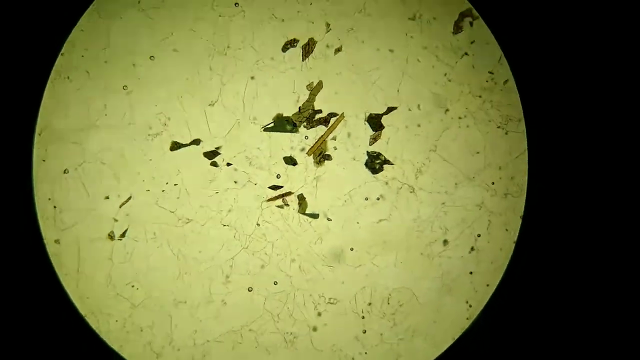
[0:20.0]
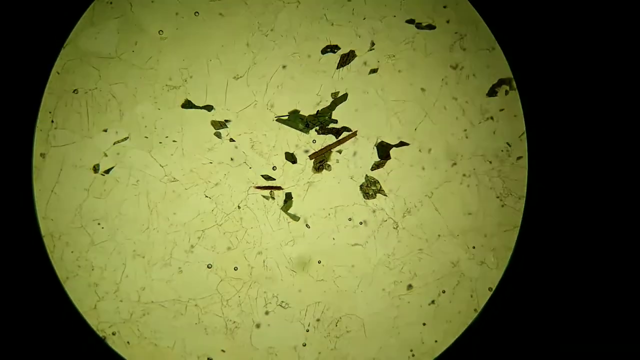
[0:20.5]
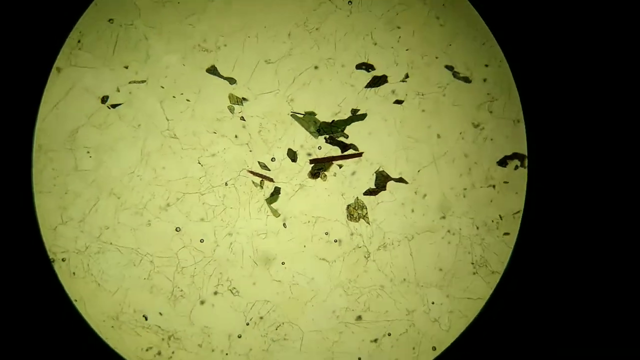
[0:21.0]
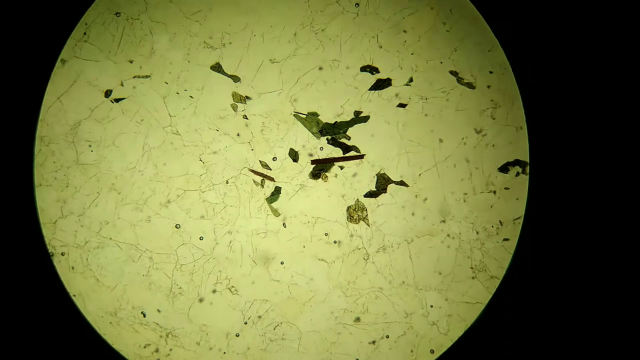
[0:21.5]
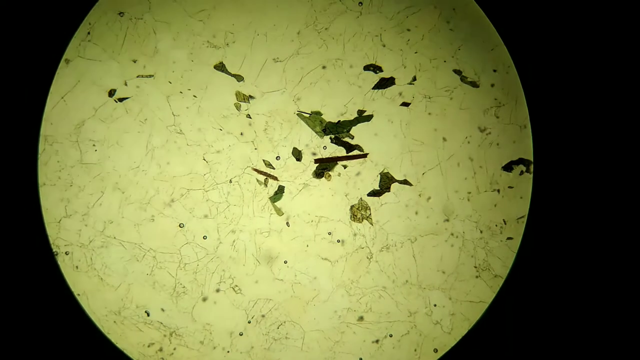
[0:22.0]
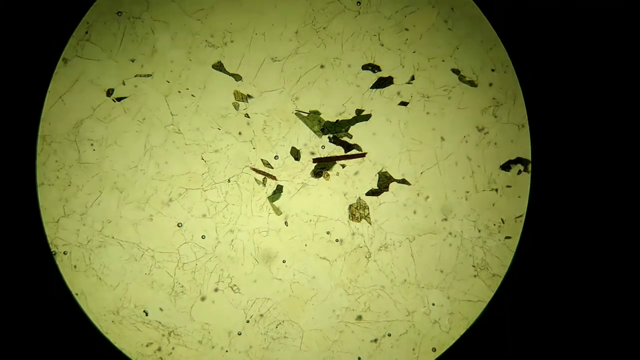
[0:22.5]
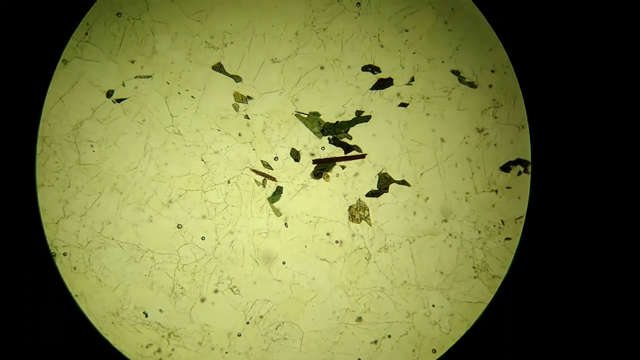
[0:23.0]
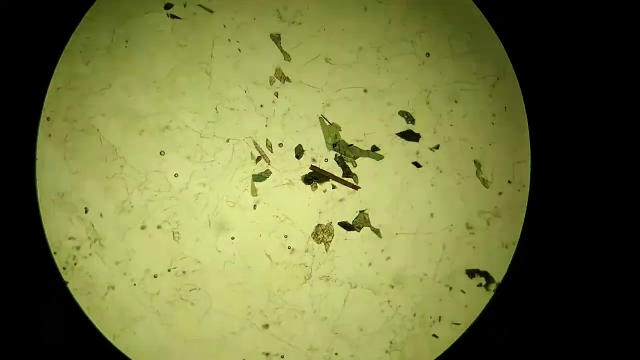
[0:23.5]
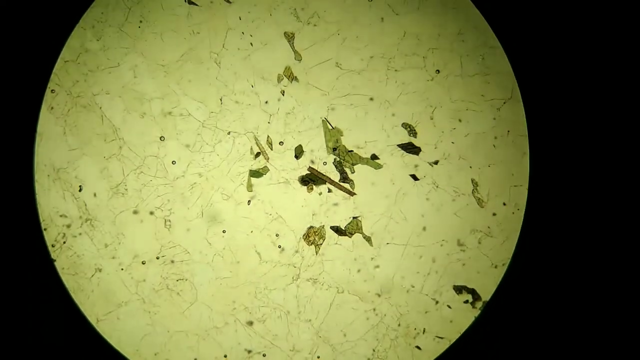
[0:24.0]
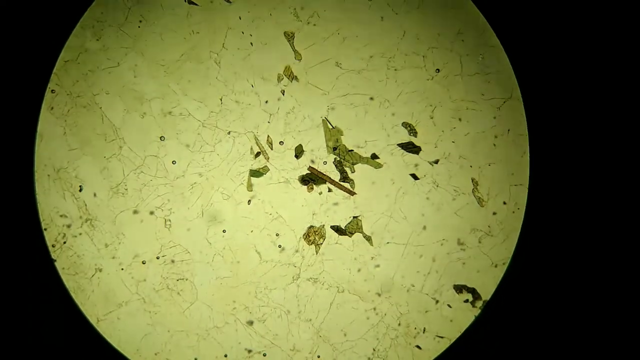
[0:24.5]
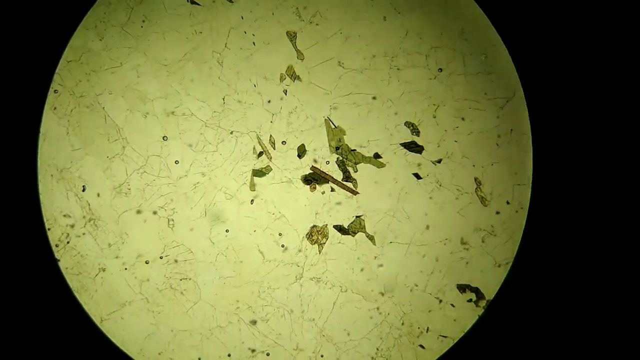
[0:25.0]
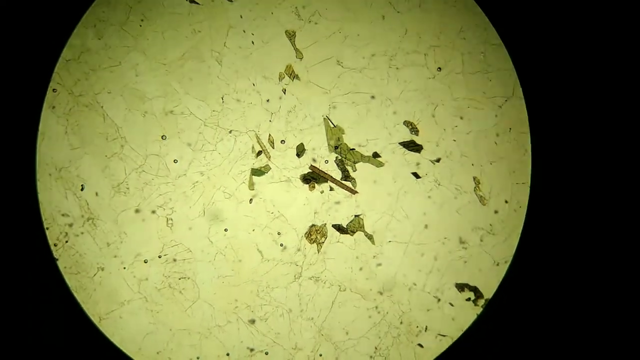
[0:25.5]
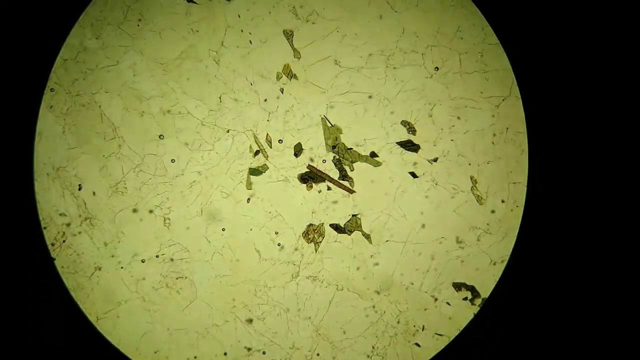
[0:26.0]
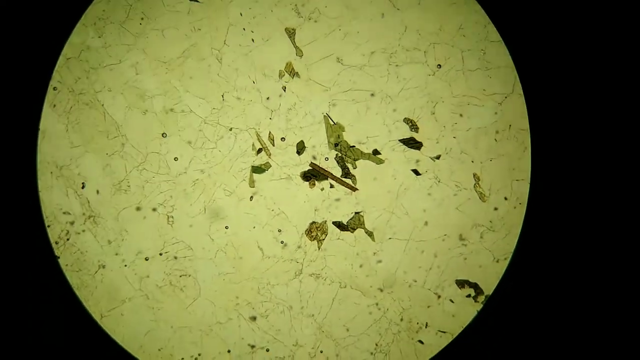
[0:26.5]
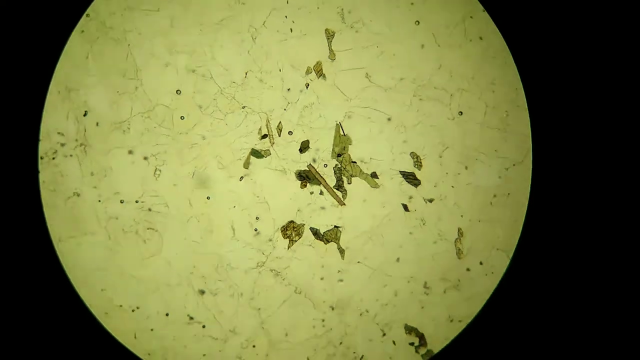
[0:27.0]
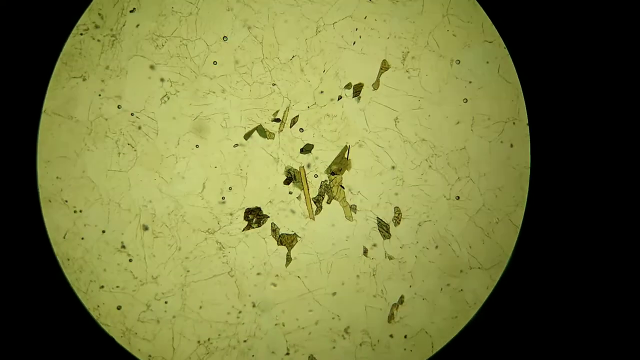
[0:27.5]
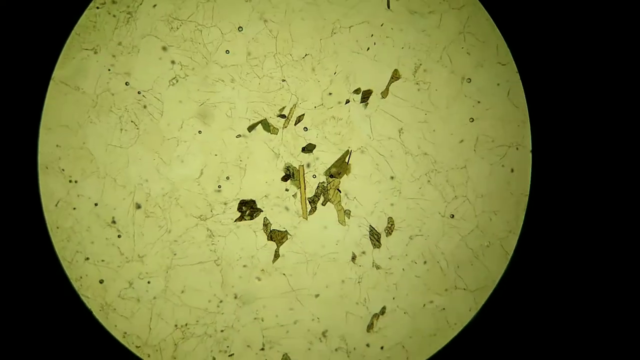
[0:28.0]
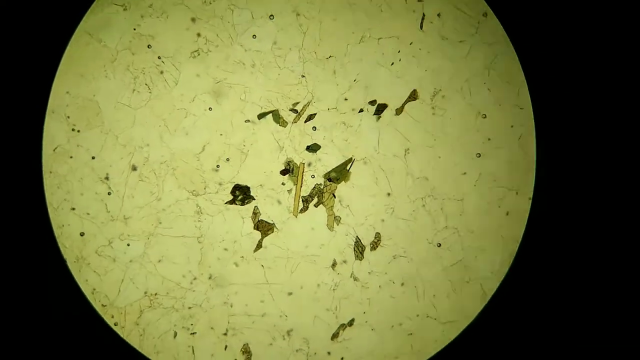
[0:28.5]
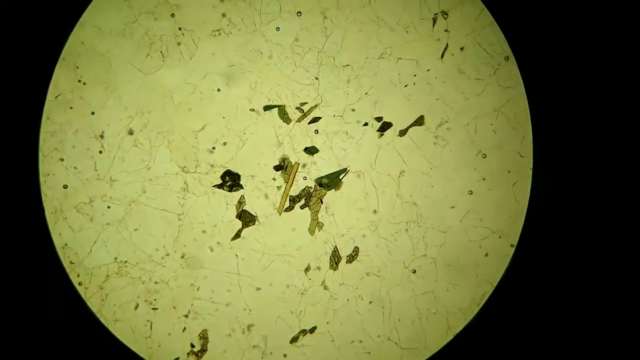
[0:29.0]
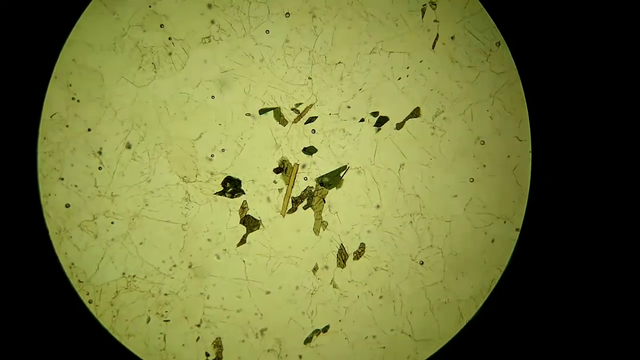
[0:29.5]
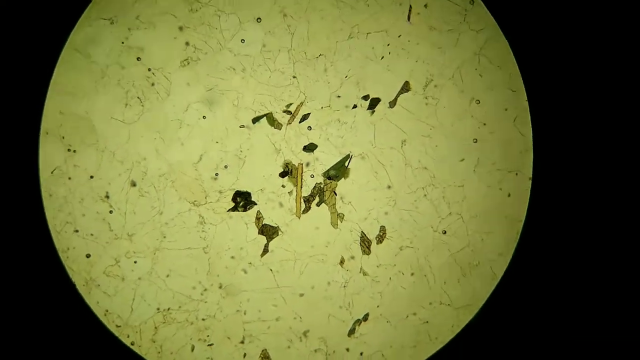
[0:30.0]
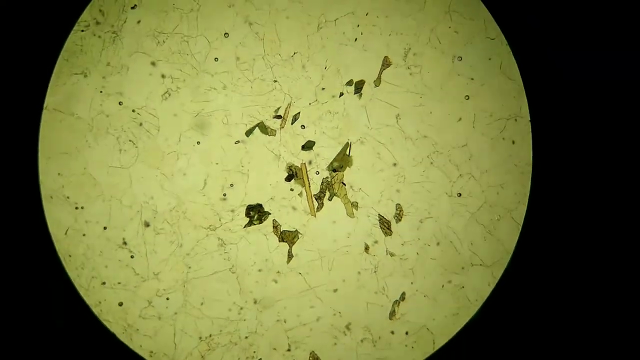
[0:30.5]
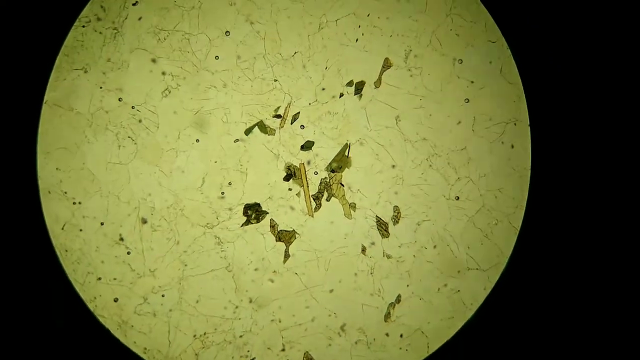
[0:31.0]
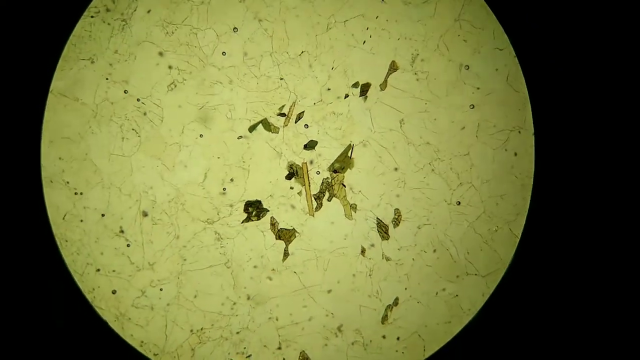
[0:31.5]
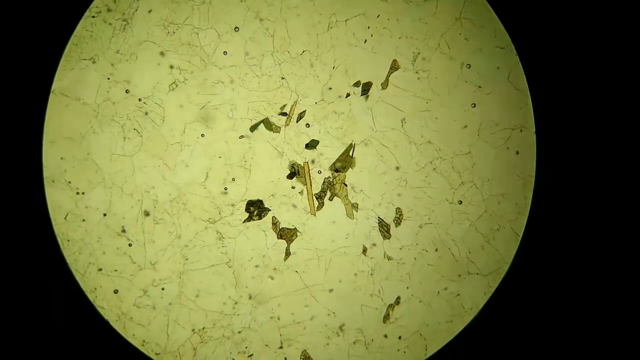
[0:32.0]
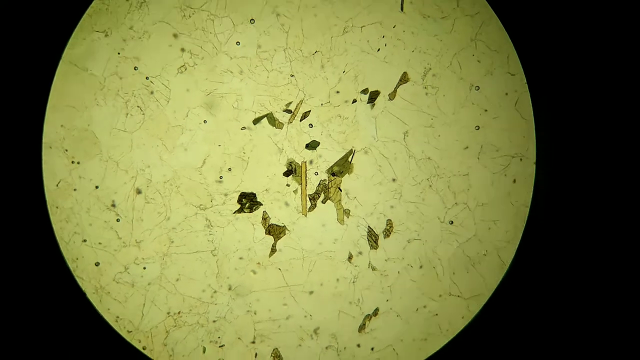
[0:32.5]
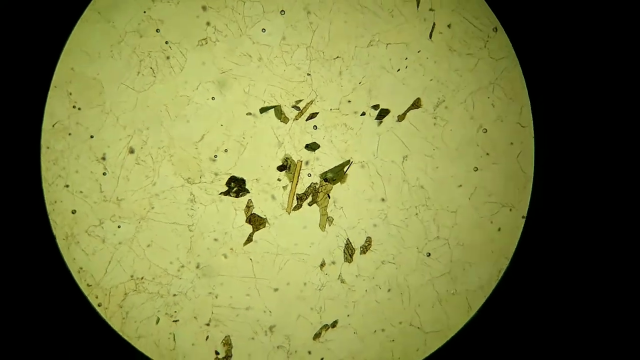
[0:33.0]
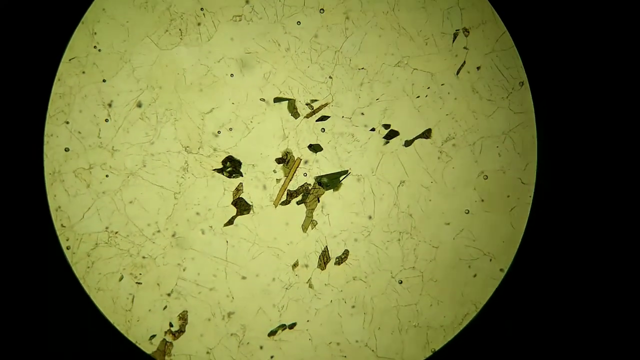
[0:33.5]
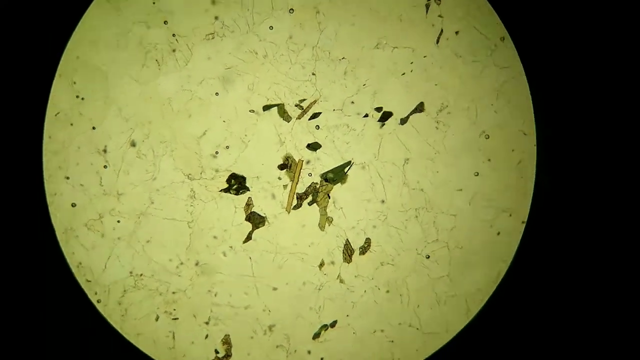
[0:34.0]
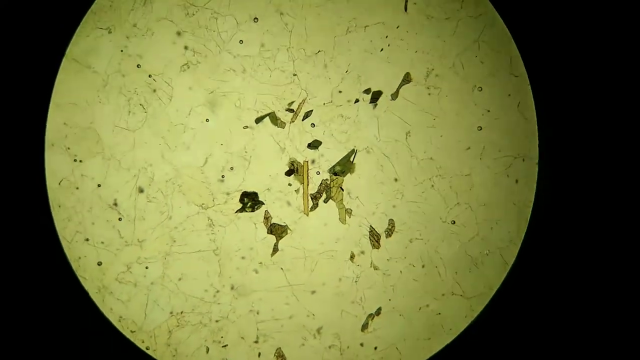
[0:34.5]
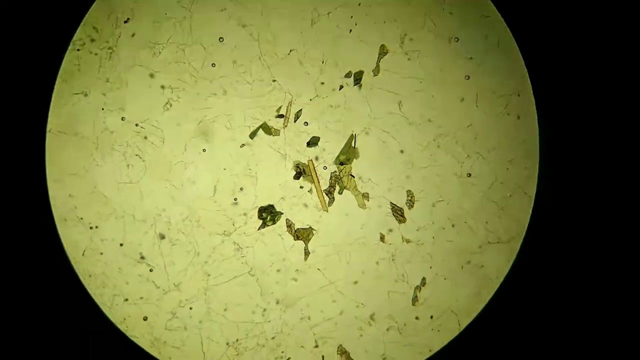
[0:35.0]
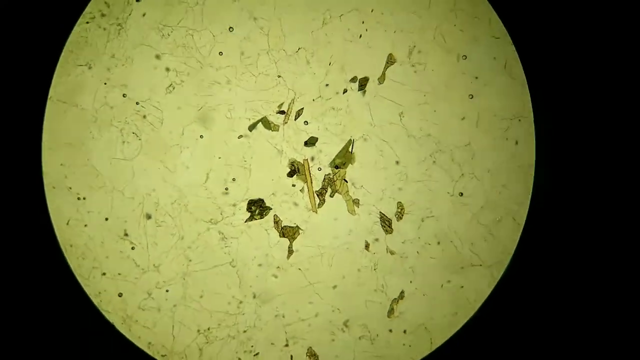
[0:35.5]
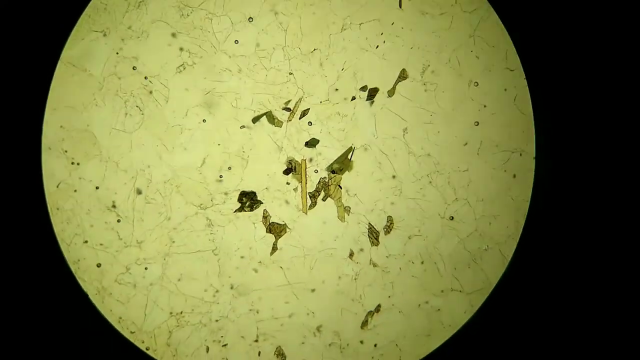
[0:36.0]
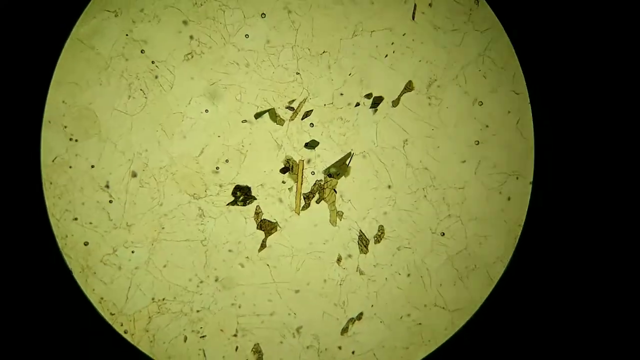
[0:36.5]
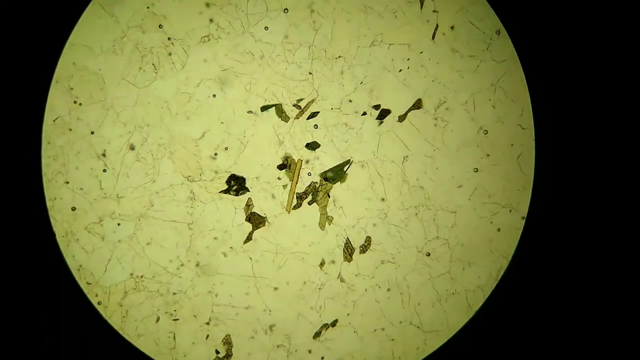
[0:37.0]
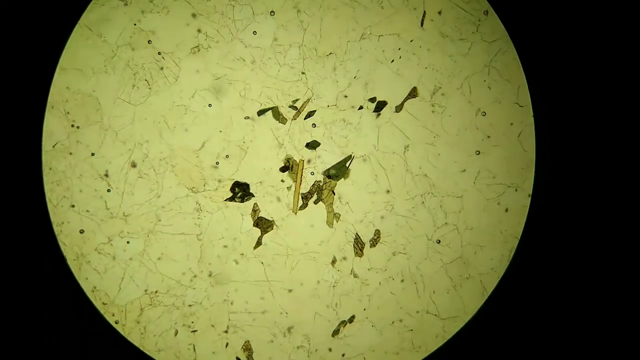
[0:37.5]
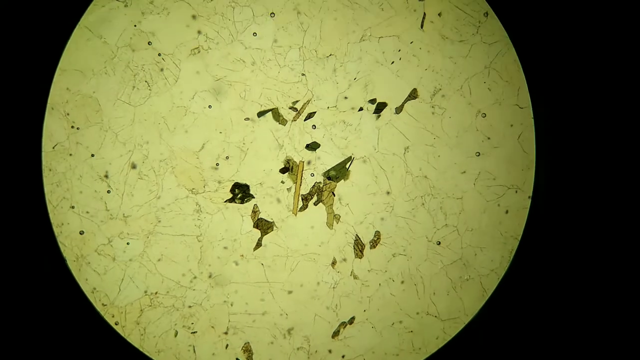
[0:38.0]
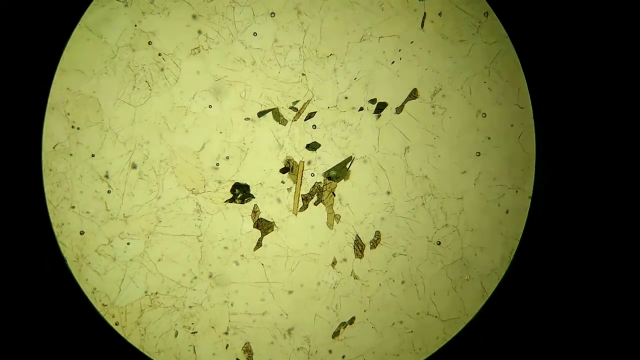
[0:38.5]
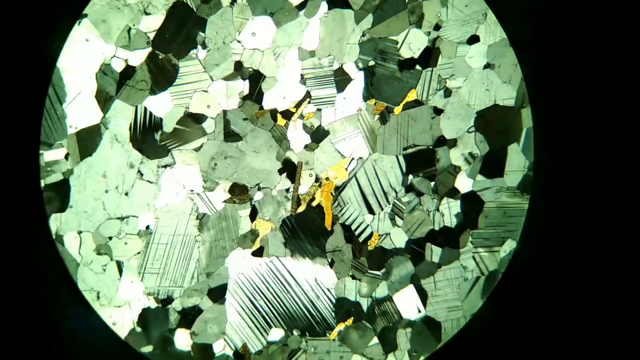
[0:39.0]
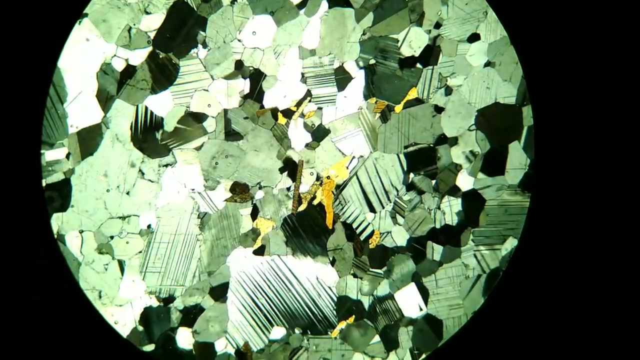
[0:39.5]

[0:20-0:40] The video transitions to another view of the substance; it is unclear whether this is a different rock or whether the magnification has been lifted, but parts of it look like the same pieces of material seen in the original piece. The magnifying glass or microscope then appears to switch lenses to a more highly magnified look at the material, which seems to be some type of glass or stone, possibly a gemstone. The high magnification shows the imperfections in the material.